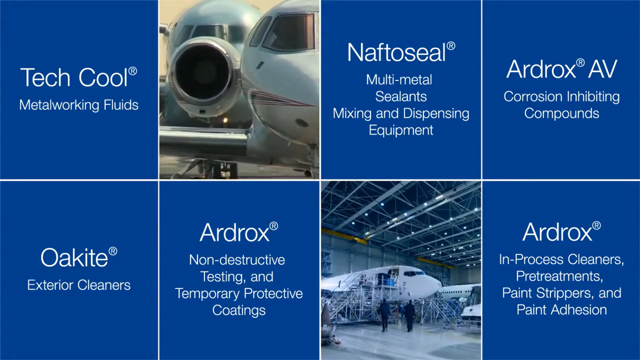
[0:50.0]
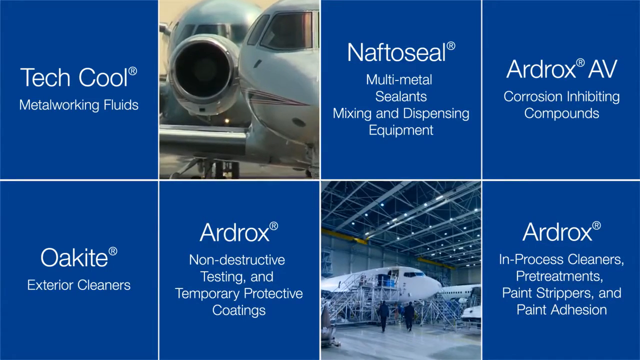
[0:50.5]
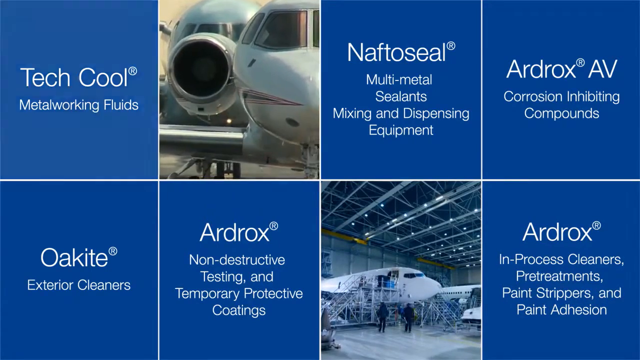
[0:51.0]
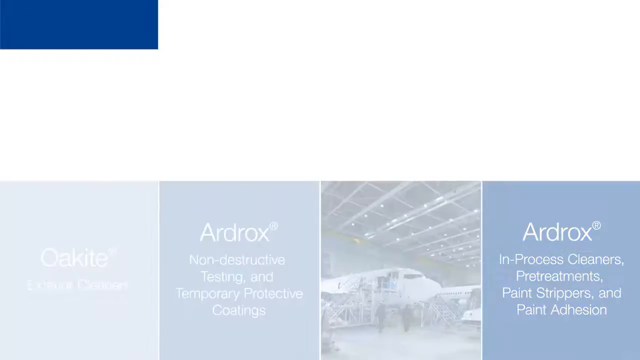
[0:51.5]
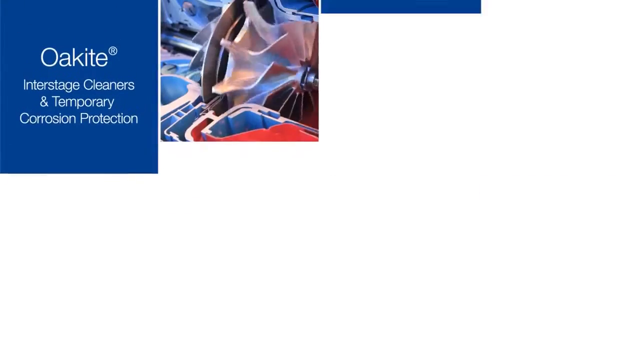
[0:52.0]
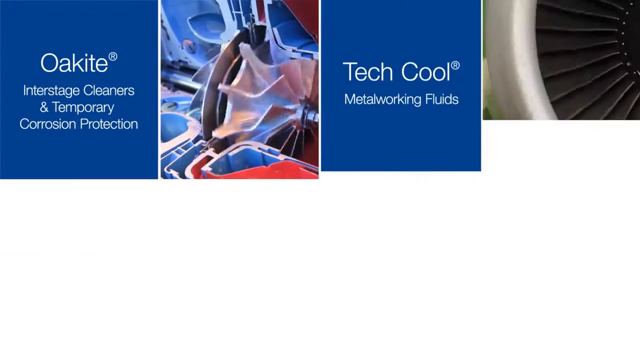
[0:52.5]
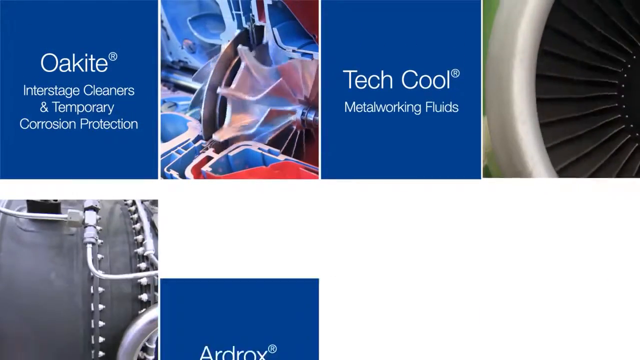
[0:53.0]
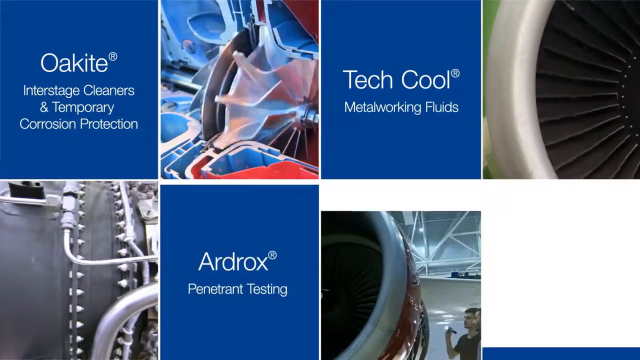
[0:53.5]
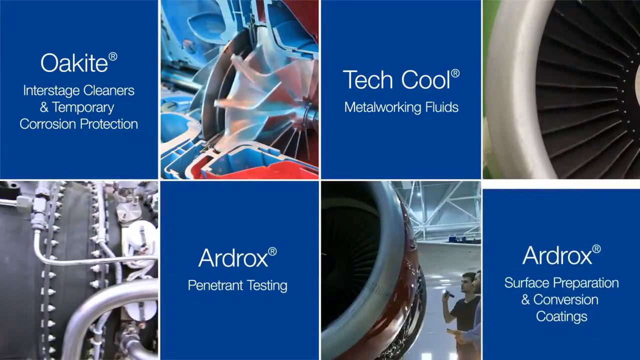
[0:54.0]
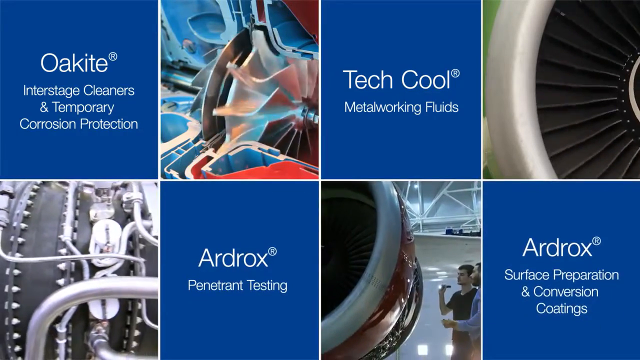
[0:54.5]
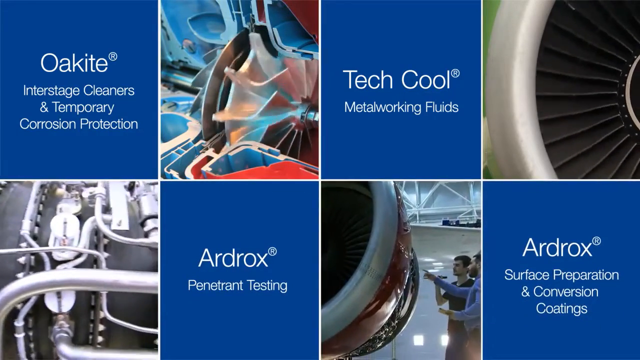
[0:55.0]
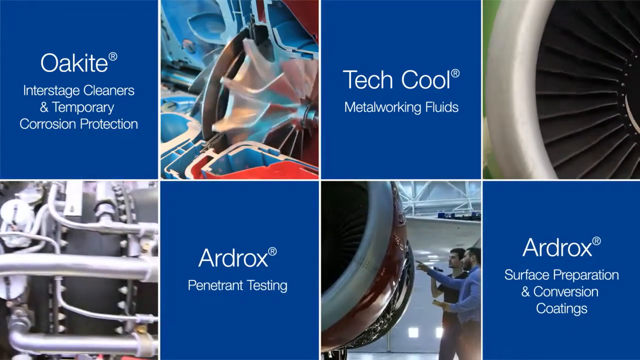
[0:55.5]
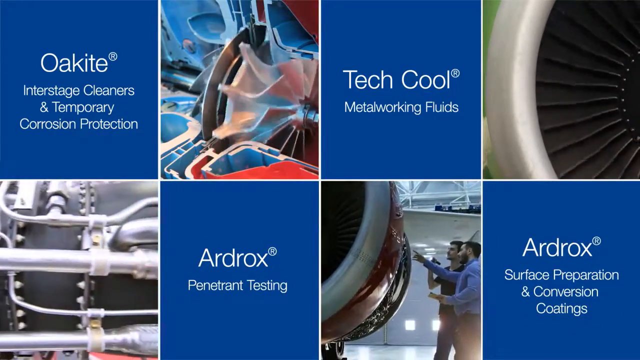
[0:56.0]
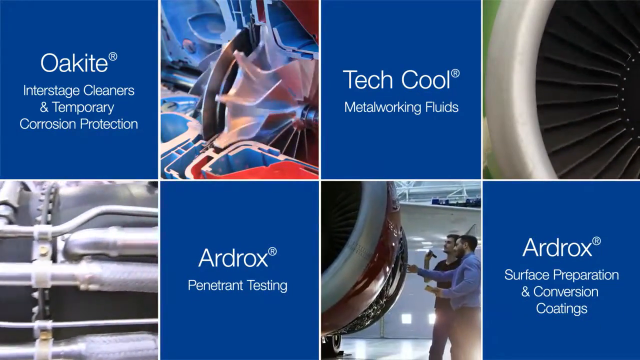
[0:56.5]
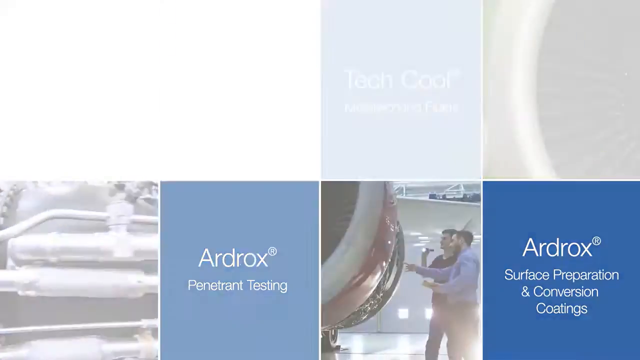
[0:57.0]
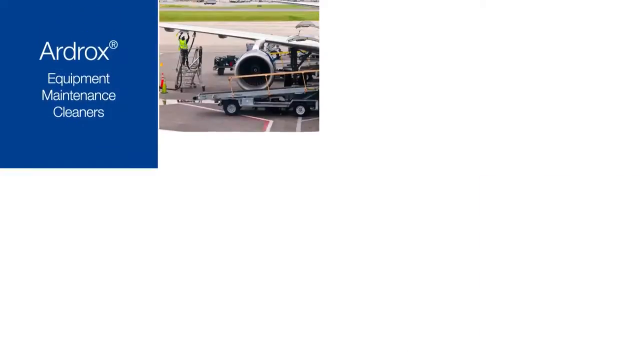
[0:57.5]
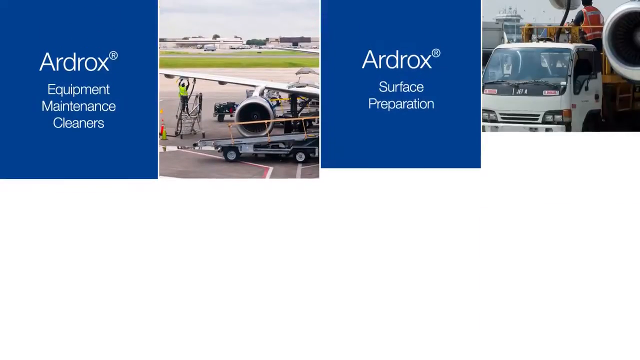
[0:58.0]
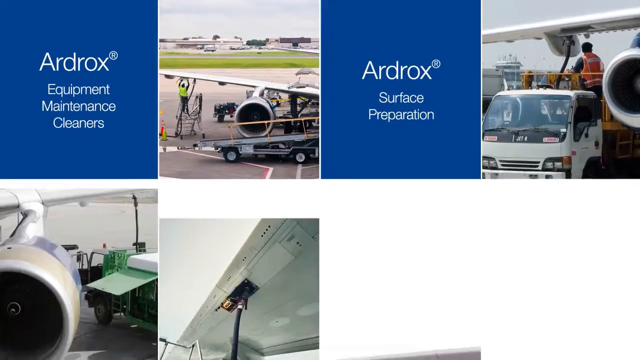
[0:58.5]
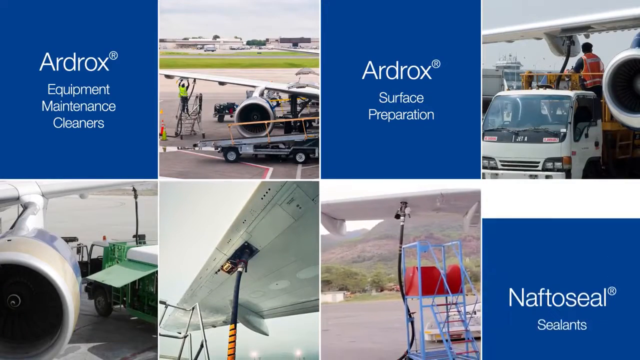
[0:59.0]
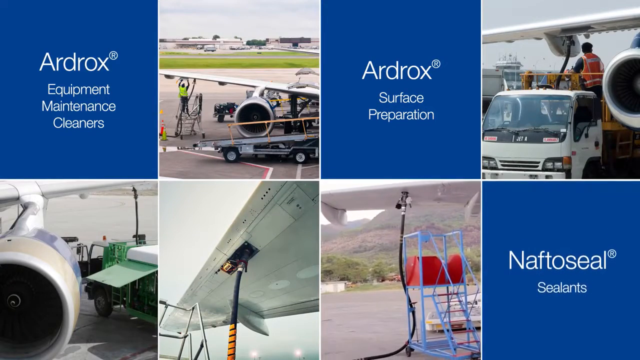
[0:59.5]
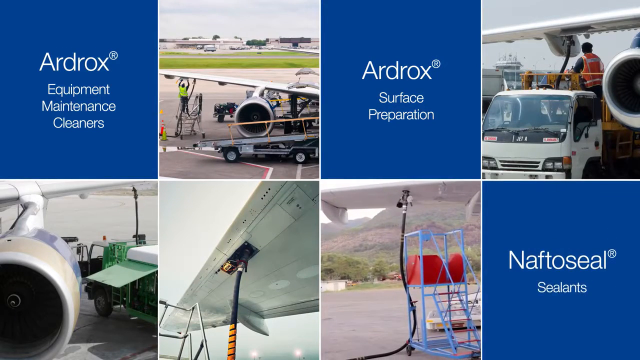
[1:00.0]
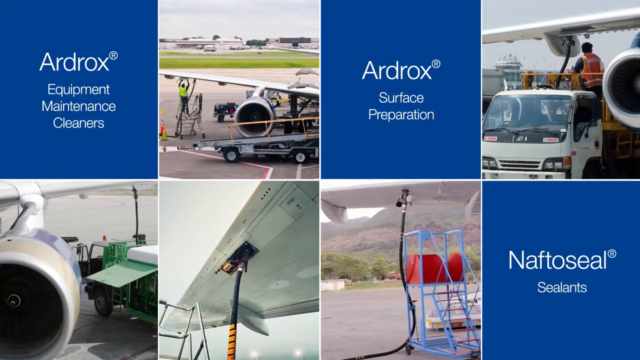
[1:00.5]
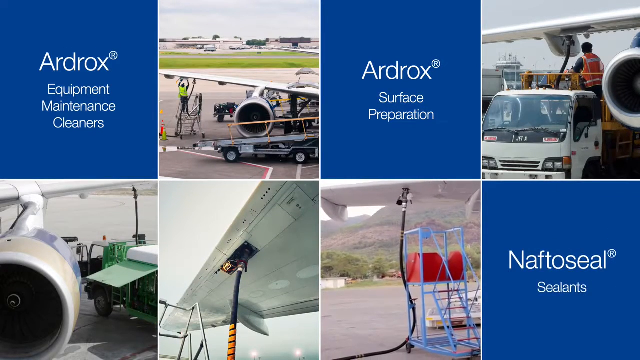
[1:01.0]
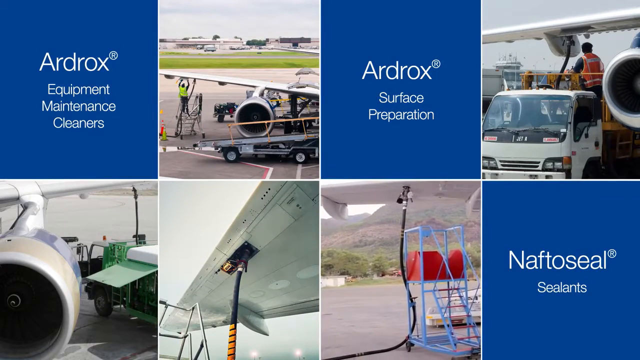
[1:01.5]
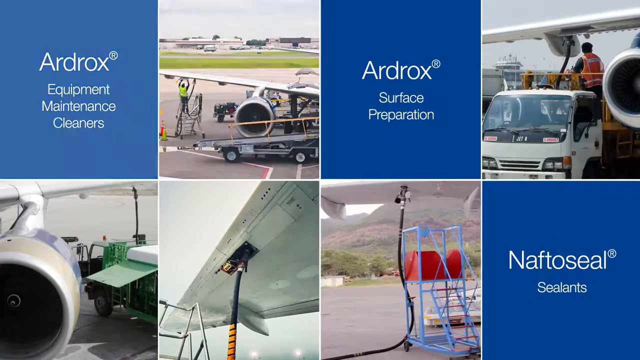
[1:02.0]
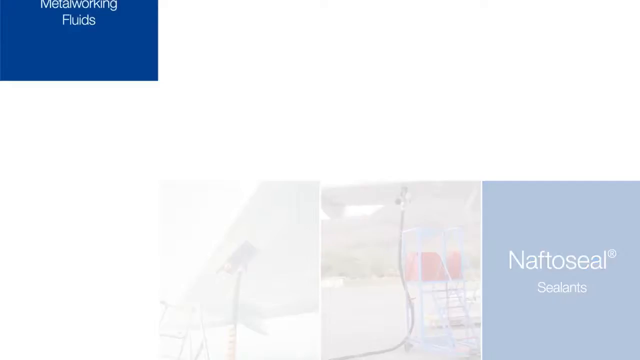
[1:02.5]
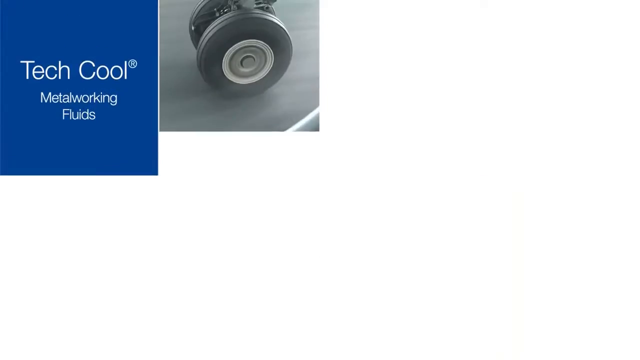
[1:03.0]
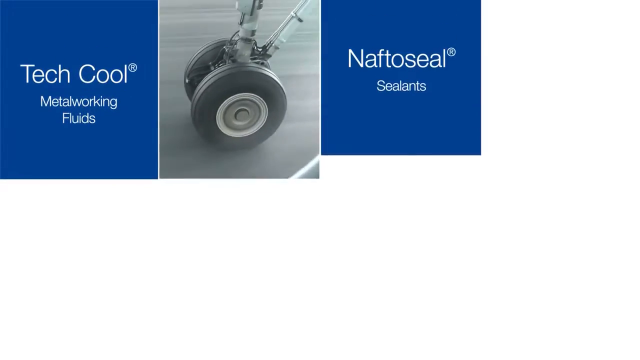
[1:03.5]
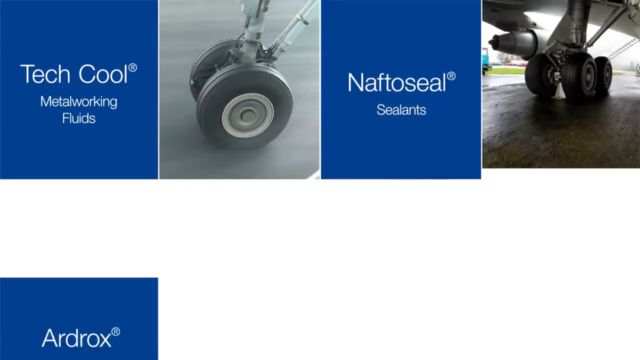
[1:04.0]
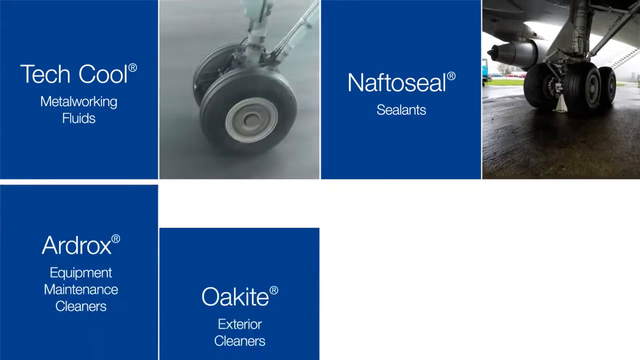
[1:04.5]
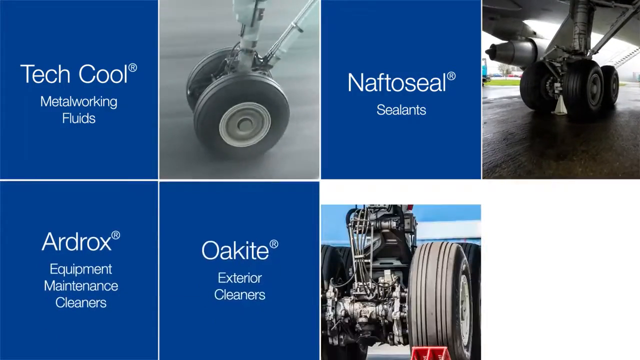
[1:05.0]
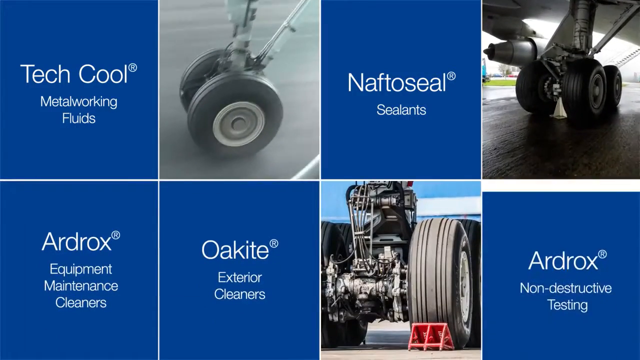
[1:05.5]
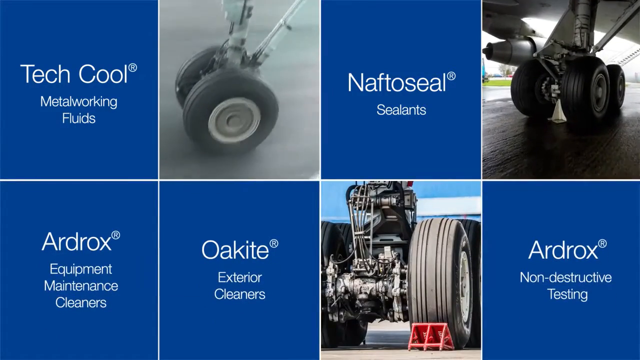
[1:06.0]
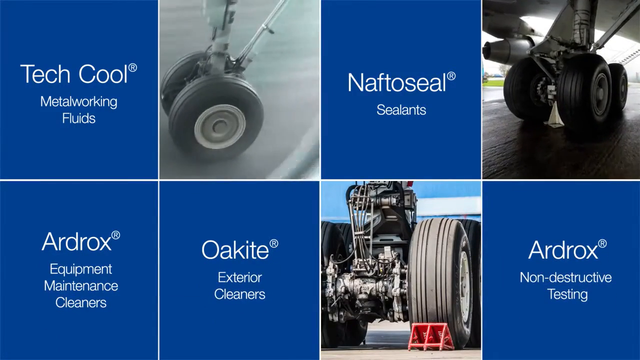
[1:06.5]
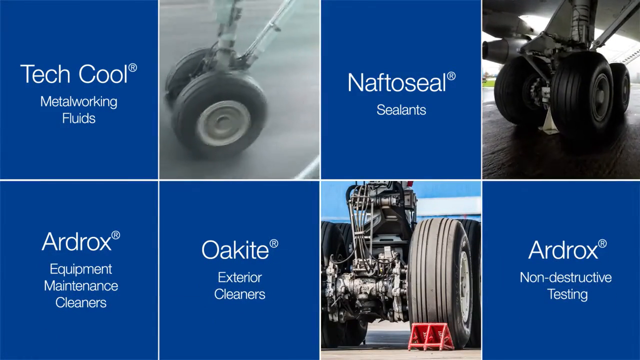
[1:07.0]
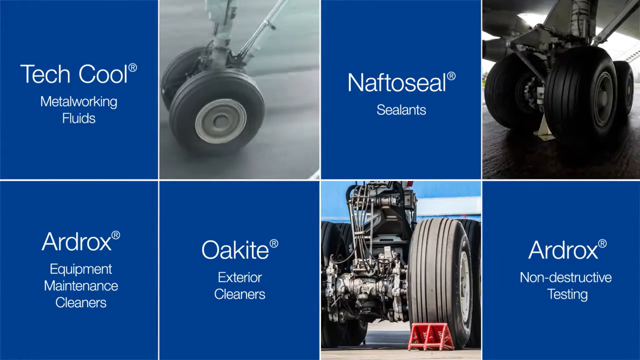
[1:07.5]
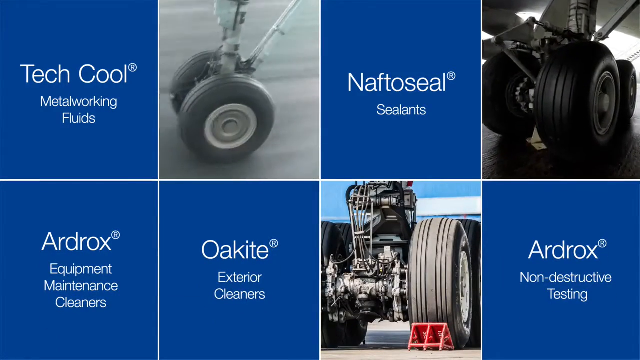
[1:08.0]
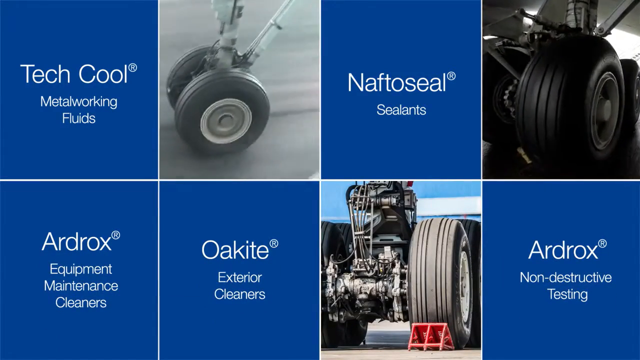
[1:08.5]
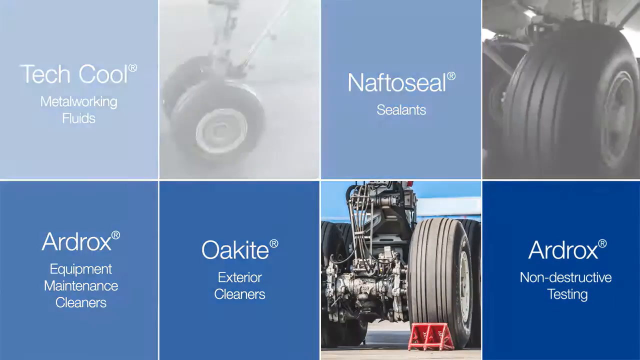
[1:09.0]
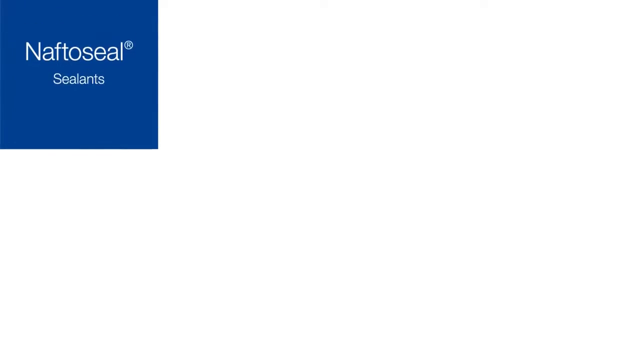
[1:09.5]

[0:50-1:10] A grid of square tiles fills the screen, four on the top and four on the bottom, with white in between. The upper left tile says "Tech Cool, metal working fluids." The next is an image of two airplanes. The next says "NAFTO seal, multi-metal sealants, mixing and dispensing equipment, Ardrox AV." The bottom left tile says "Okite exterior cleaners." The next is "Ardrox, non-destructive testing and temporary protective coatings." The next is an image of a couple of airplanes in a hangar, and the last is "Ardrox in-process cleaners, pretreatment paint strippers and paint adhesion." Then more blocks come down forming another grid. On the left side one says "Okite interstage cleaners and temporary corrosion protection." Next is a computer animated graphic of some kind of gear turning, probably inside an airplane. The next says "Tech Cool, metal working fluids," followed by a 3D image of an airplane engine spinning. In the bottom left corner is a 3D image of a piece of the airplane with lots of pipes, then a tile saying "Ardrox penetrant testing." Next is a video of two men looking at the engine of an airplane and touching it: one man touches it with his right hand while the other holds a flashlight in his right hand and looks where the first man is touching. The last block is "Ardrox surface preparation and conversion coatings." More squares appear: one says "Ardrox equipment maintenance cleaners," there is an image of someone fixing an airplane wing, then "Ardrox surface preparation," then an image of a man on a truck outside where the airplane is. In the bottom left corner is an image of an airplane engine, then an image of the underside or the inside of an airplane, then an image of some kind of tube connected to an airplane wing, and the last one says "NAFTO seal sealants." More squares appear: one says "tech cool metal working fluid," followed by an image of some wheels from an airplane; one says "NAFTO seal," followed by more images of airplane wheels, which are actual videos; then "Ardrox equipment maintenance, bulkhead exterior cleaners," another image of some tires on an airplane, and "Ardrox non-destructive testing." Then more squares appear.